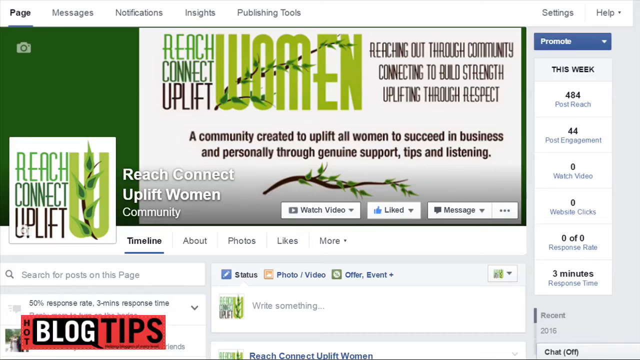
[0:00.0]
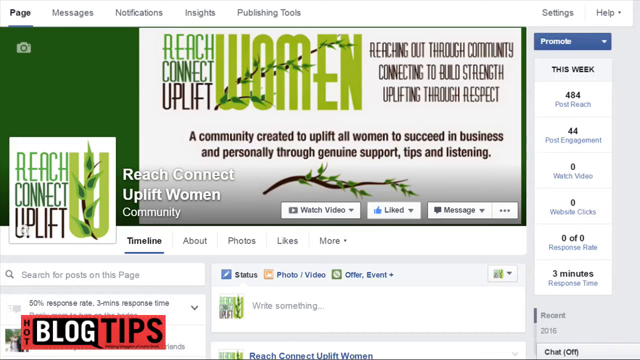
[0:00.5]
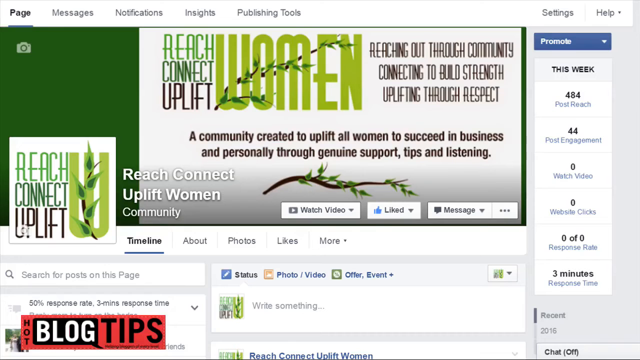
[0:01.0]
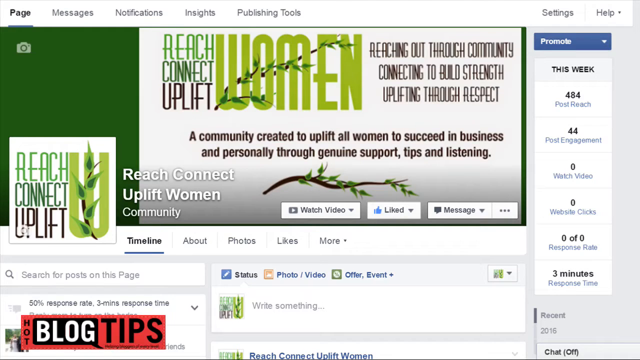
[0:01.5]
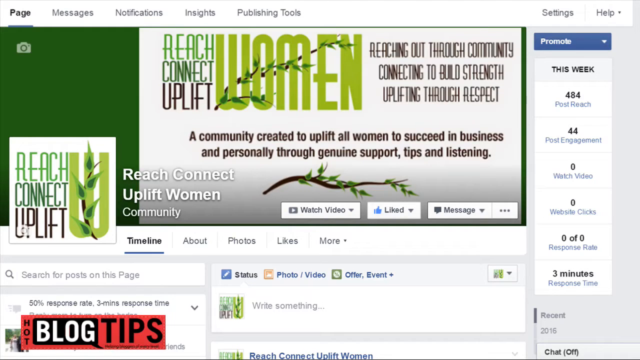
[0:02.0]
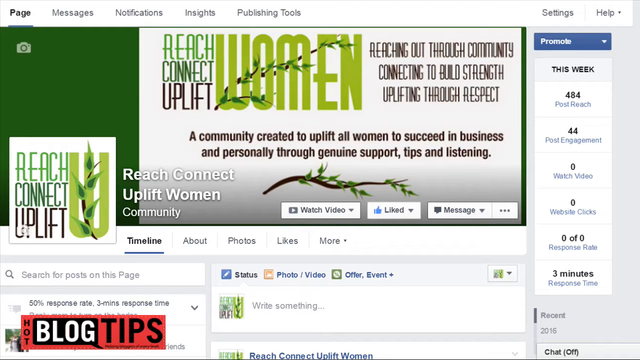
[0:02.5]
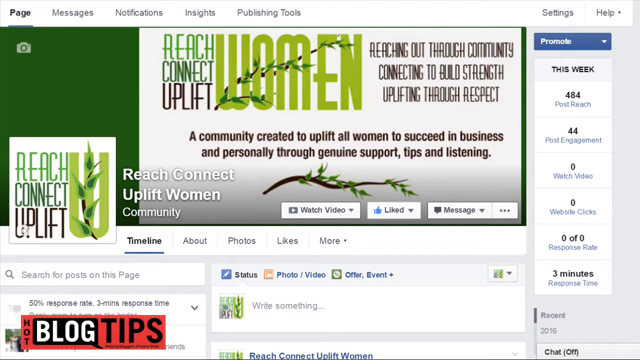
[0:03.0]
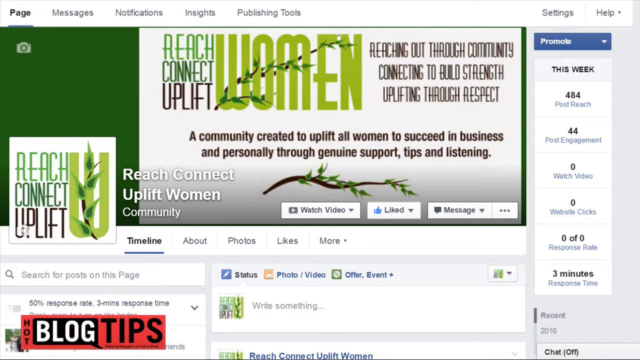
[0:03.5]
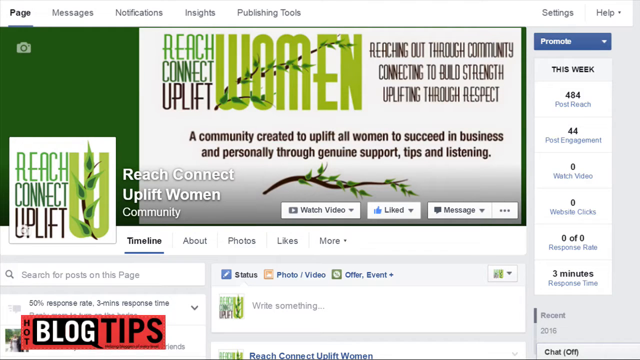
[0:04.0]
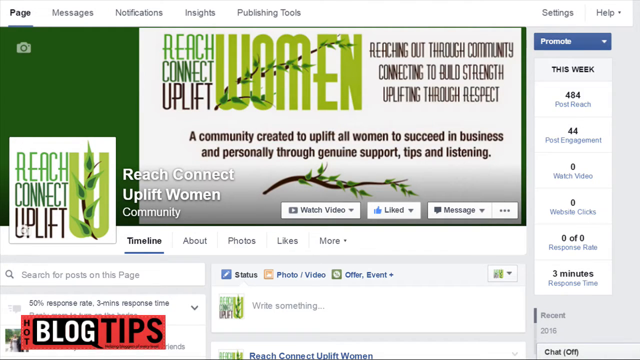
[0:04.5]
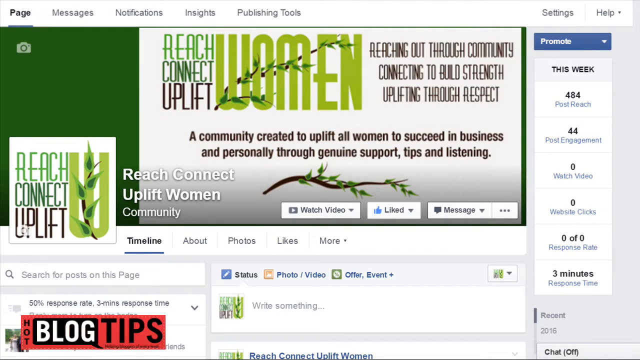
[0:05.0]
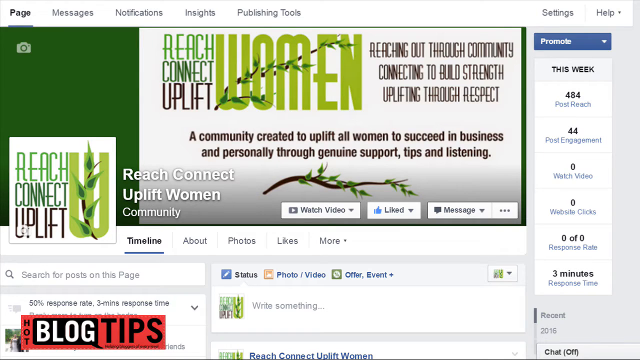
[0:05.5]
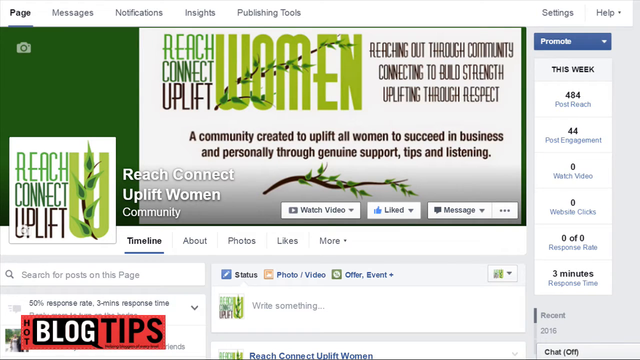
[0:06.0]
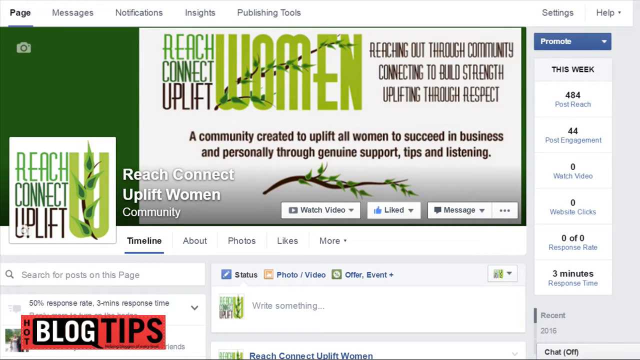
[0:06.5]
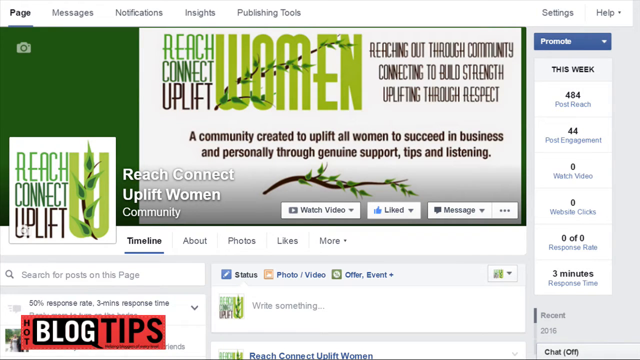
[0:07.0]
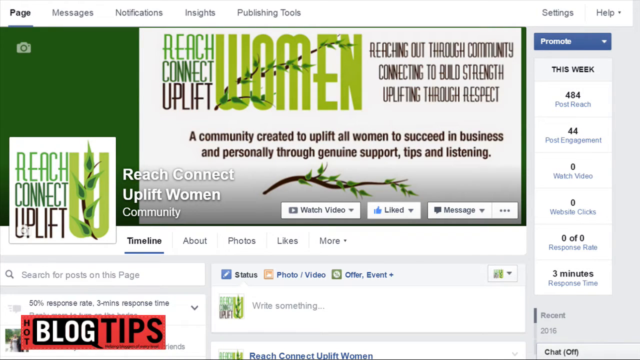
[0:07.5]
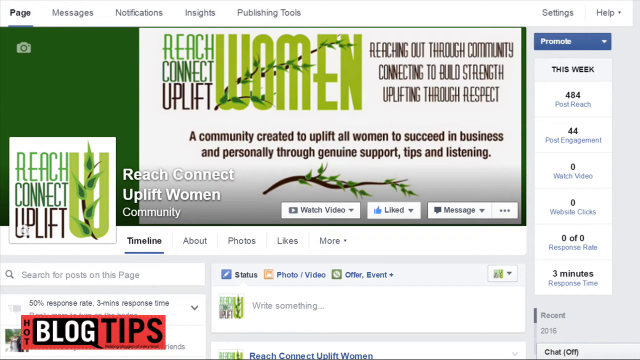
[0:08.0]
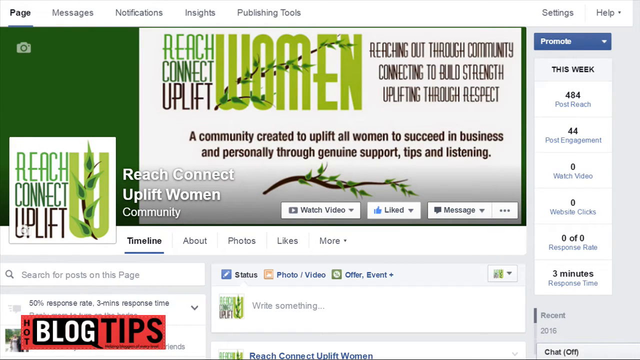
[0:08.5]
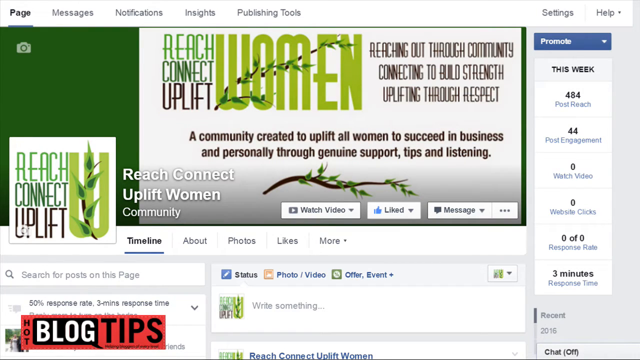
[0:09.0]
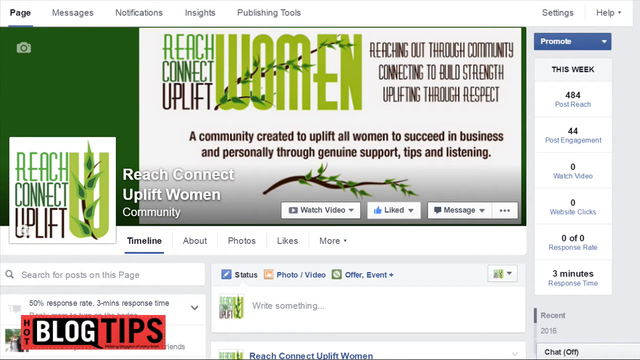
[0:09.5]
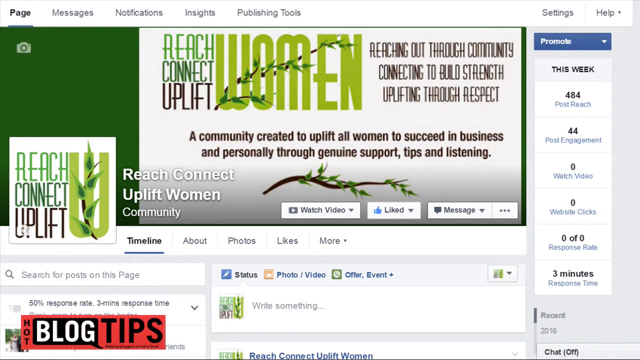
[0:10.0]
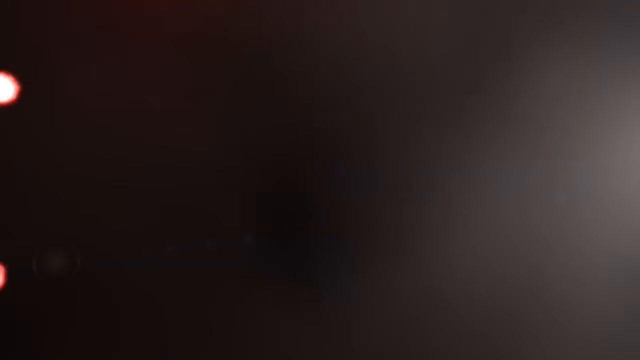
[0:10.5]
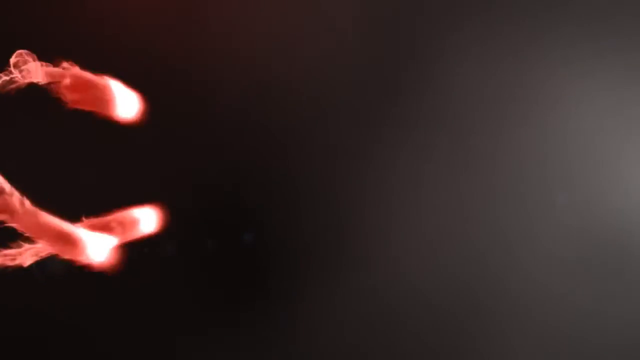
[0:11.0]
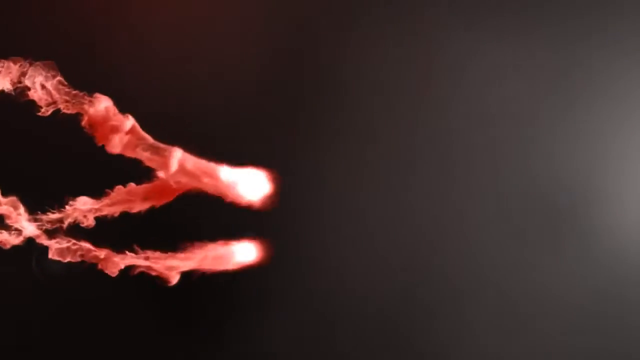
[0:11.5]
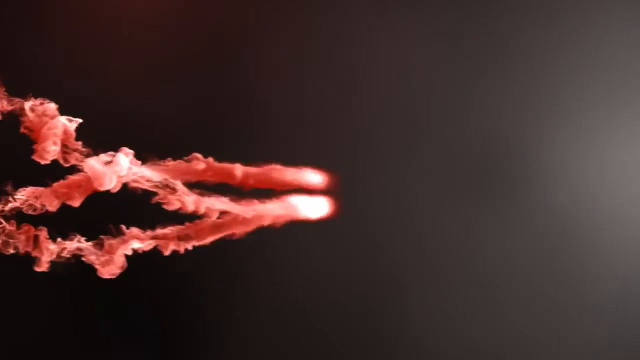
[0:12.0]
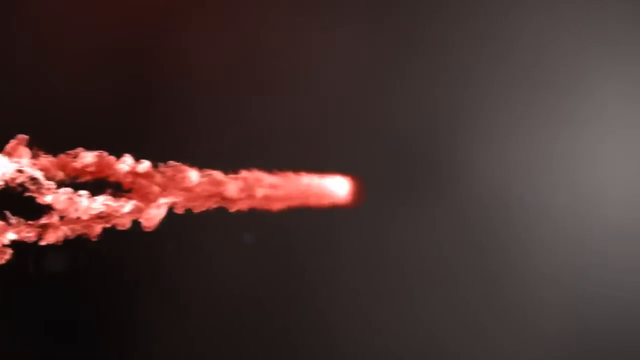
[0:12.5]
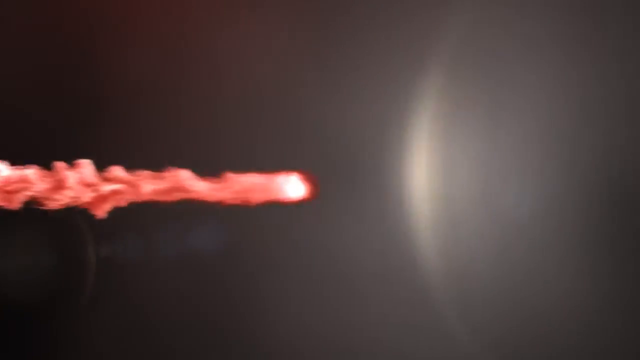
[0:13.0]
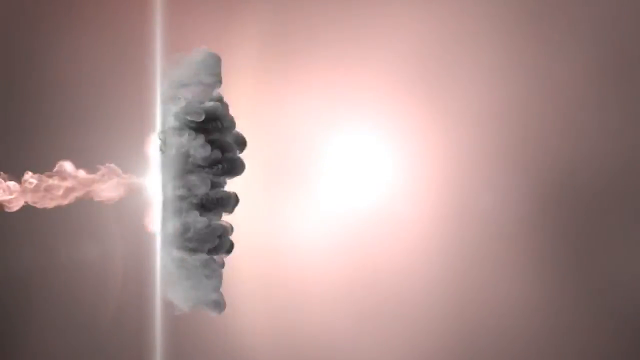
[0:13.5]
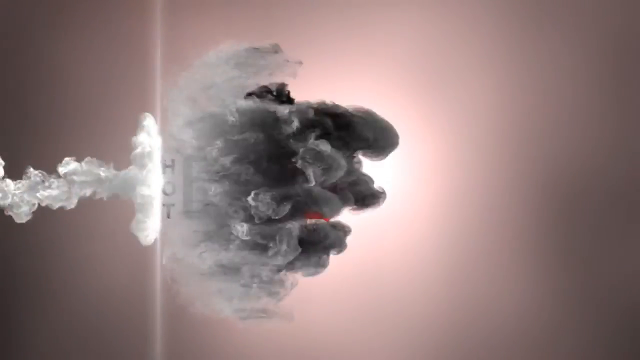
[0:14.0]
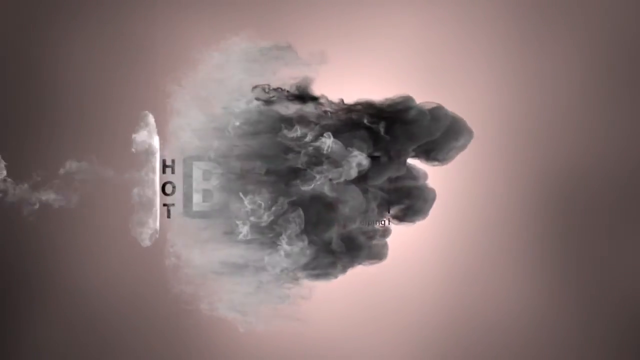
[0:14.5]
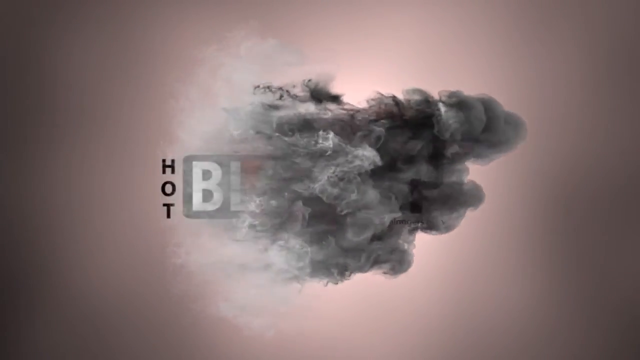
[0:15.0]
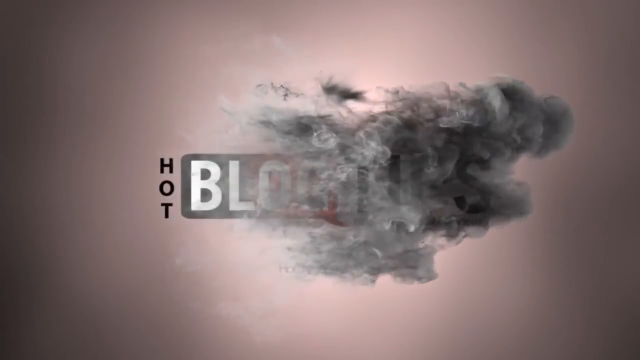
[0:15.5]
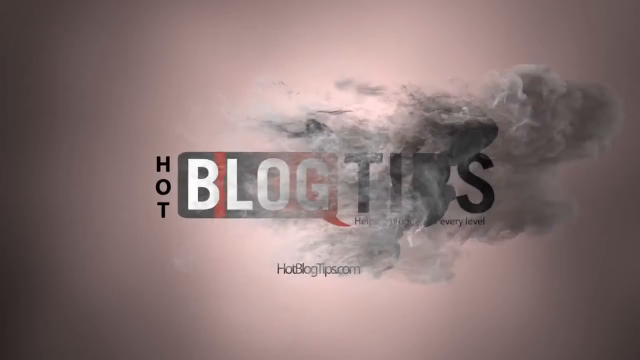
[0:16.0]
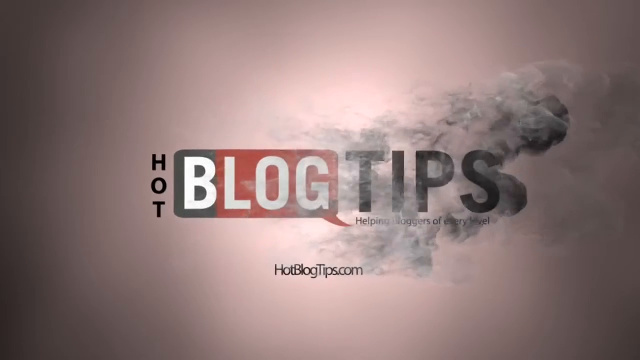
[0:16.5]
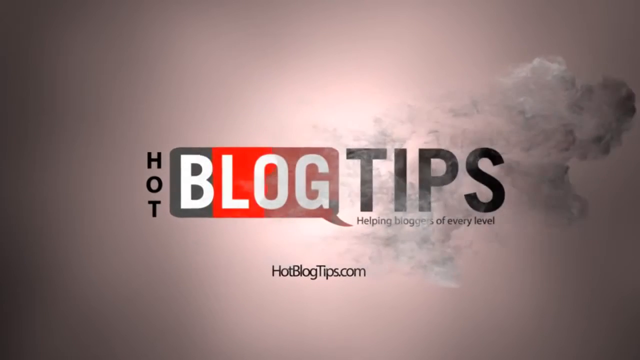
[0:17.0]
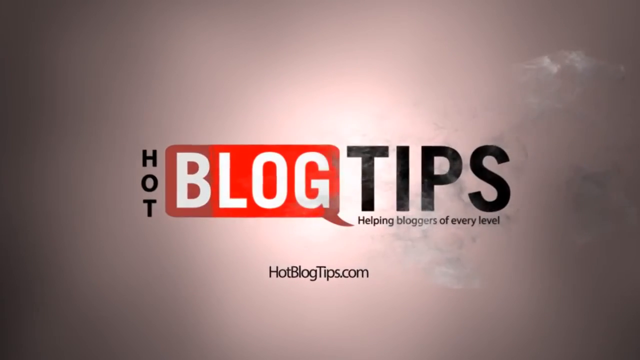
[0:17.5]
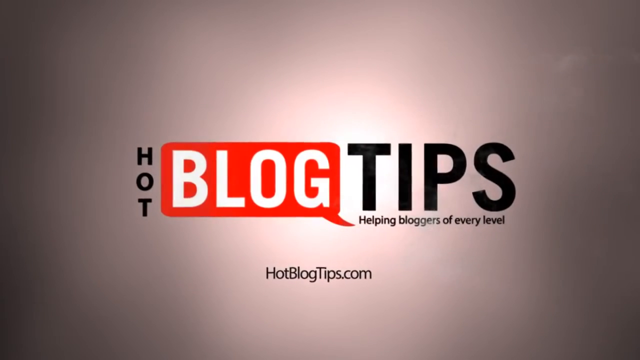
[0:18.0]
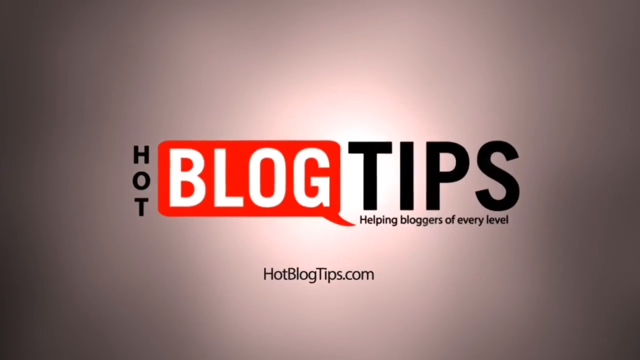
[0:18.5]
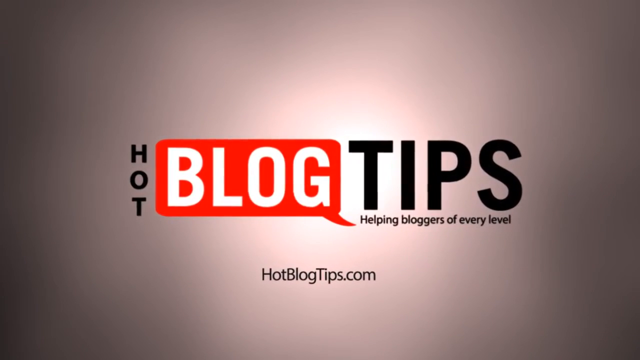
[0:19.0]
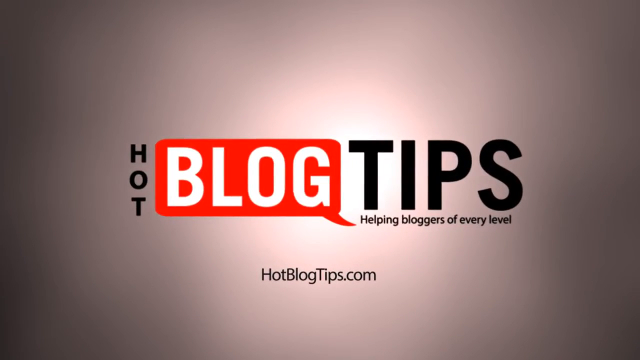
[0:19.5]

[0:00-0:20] The video opens on what seems to be a web page, possibly a home page. At the top it says "page", followed by a number of other tabs, with some content below. It quickly switches to what seems to be three small orbs with long, smoky red tails; they start out separated, then intertwine, combine and kind of collide. The word "hot" appears and turns gray, apparently part of a title that reads "Hot Blog Tips, helping bloggers of every level, hotblogtips.com", which comes toward the screen. The view returns to the other screen, showing the front page of a website that says "Reach, Connect, Uplift" and then "Women", in green with earth tones. It then stops and goes into the balls of light with red smoke, which twist around and combine.